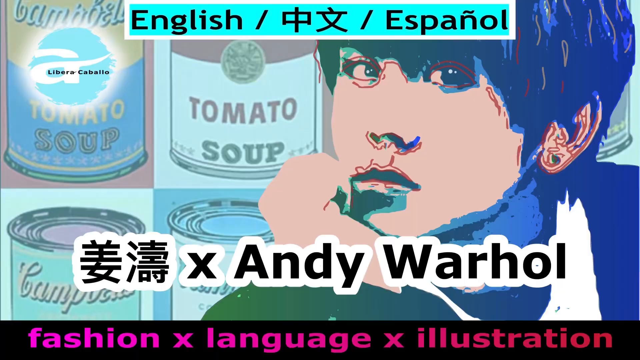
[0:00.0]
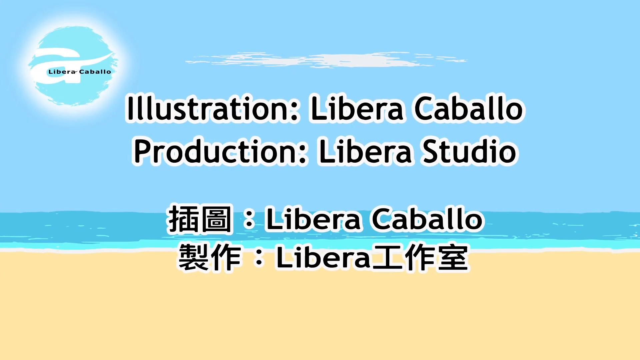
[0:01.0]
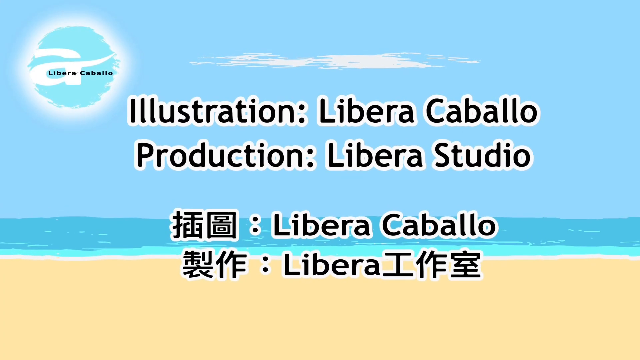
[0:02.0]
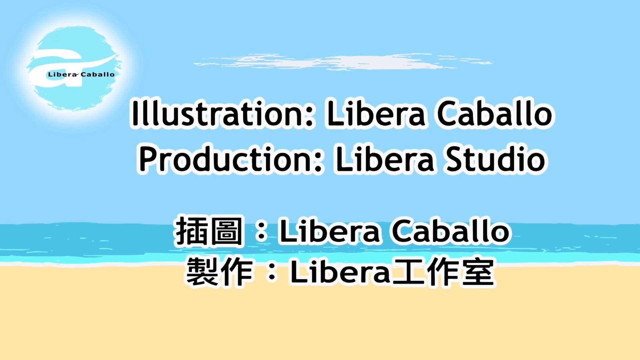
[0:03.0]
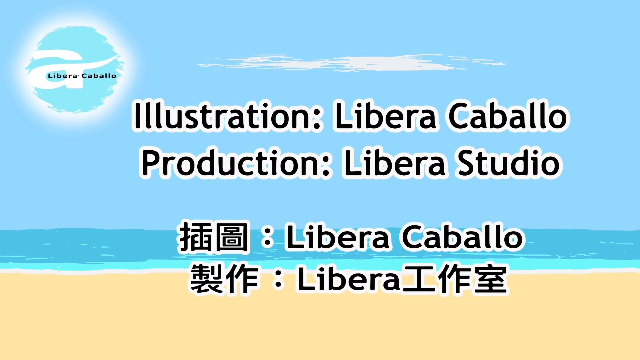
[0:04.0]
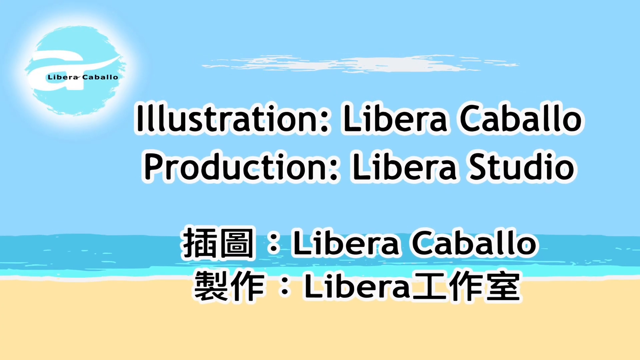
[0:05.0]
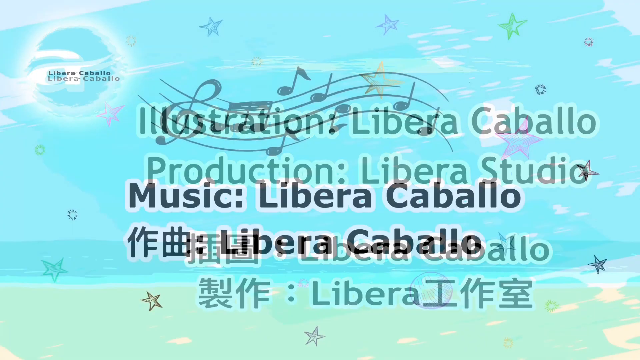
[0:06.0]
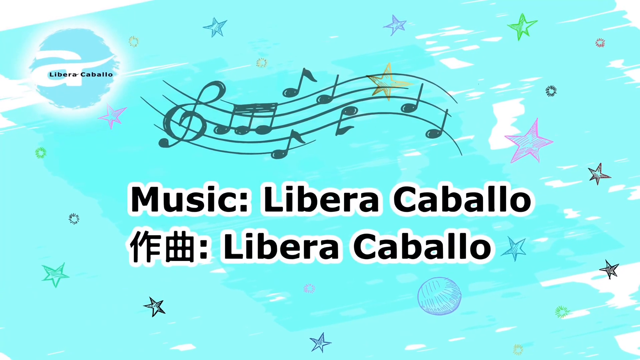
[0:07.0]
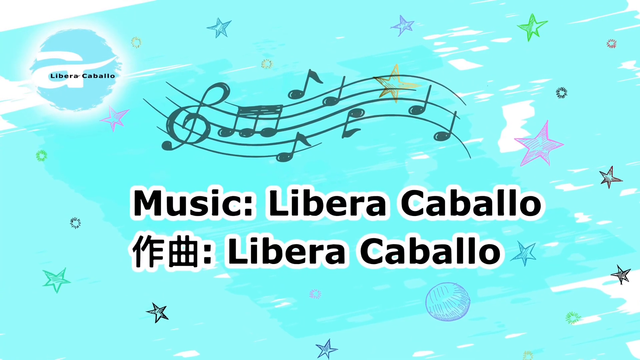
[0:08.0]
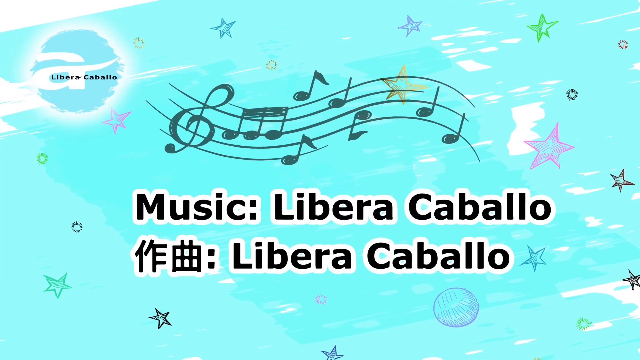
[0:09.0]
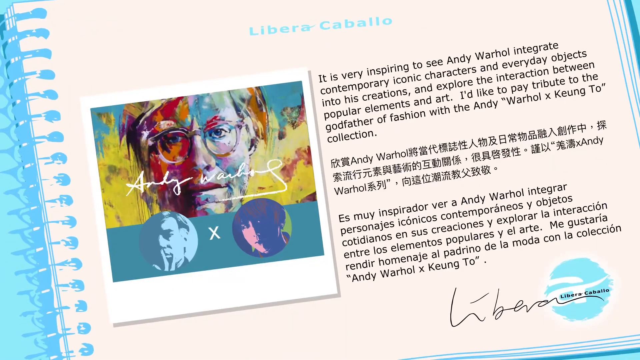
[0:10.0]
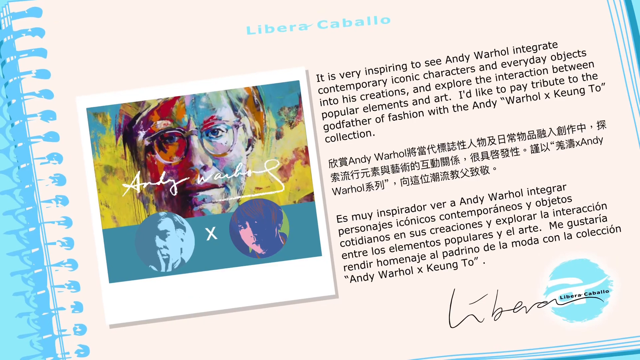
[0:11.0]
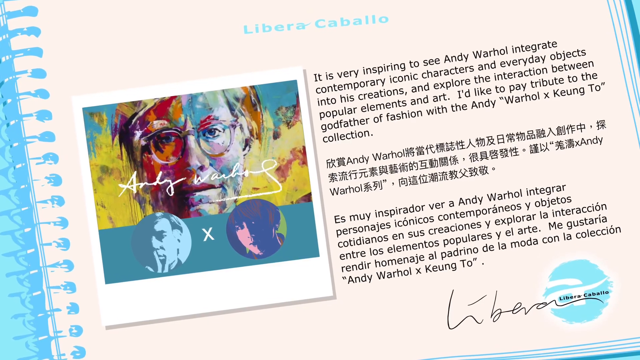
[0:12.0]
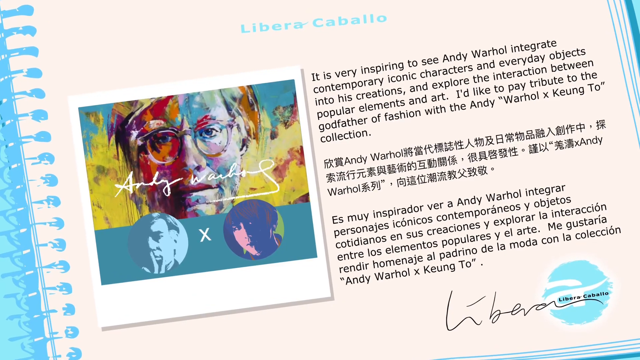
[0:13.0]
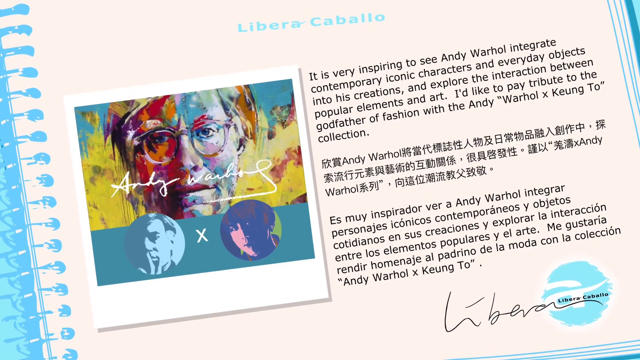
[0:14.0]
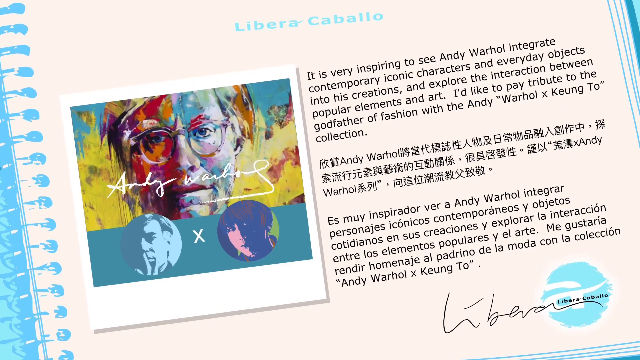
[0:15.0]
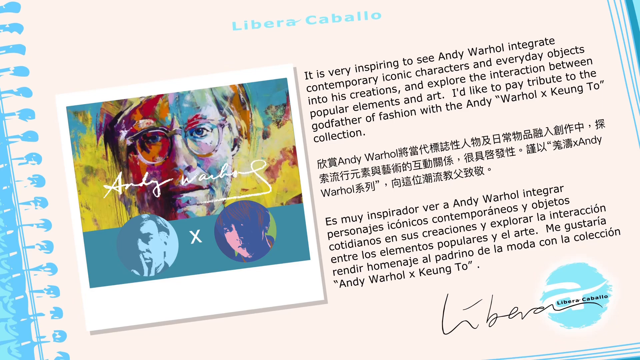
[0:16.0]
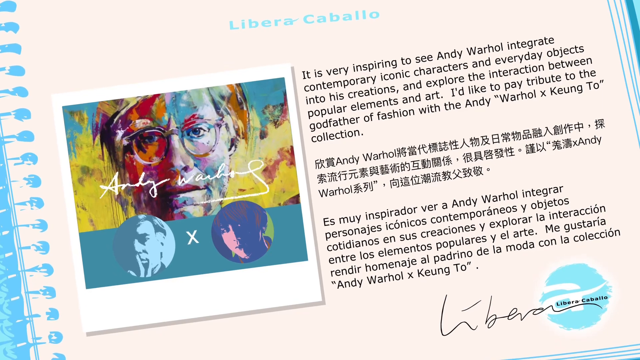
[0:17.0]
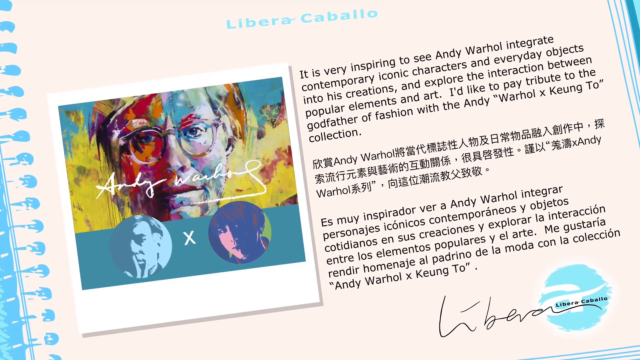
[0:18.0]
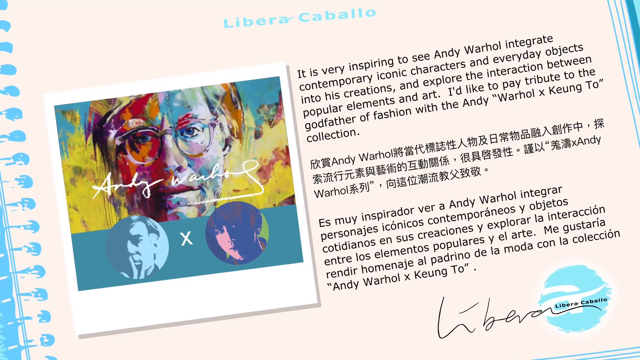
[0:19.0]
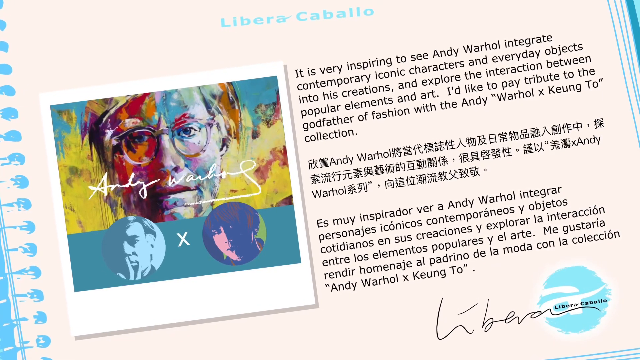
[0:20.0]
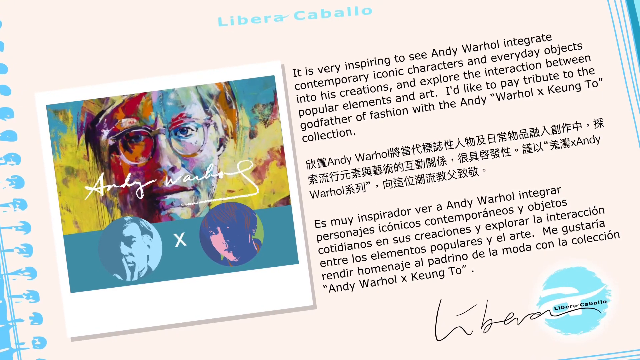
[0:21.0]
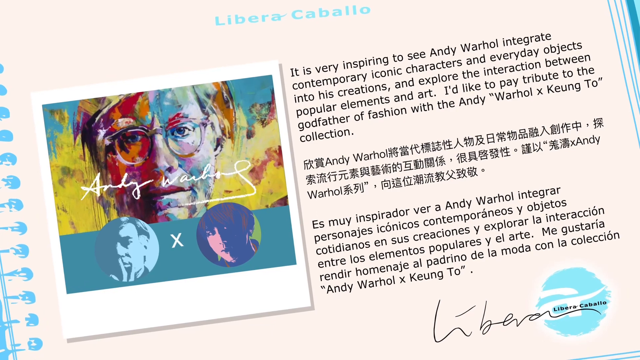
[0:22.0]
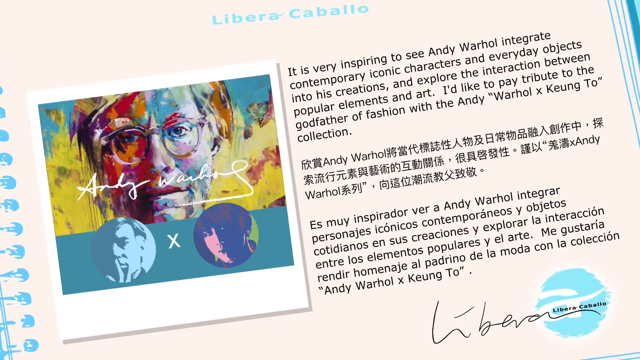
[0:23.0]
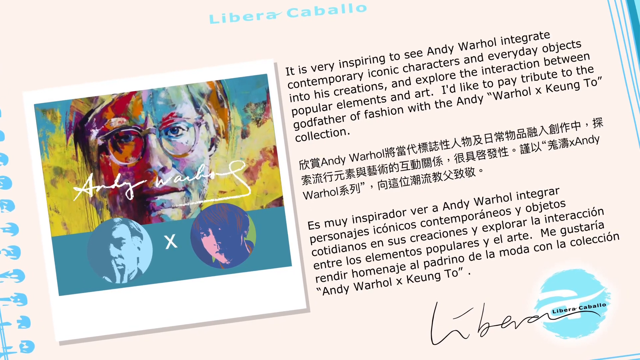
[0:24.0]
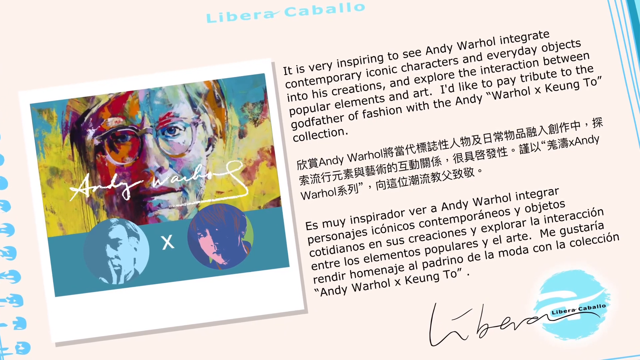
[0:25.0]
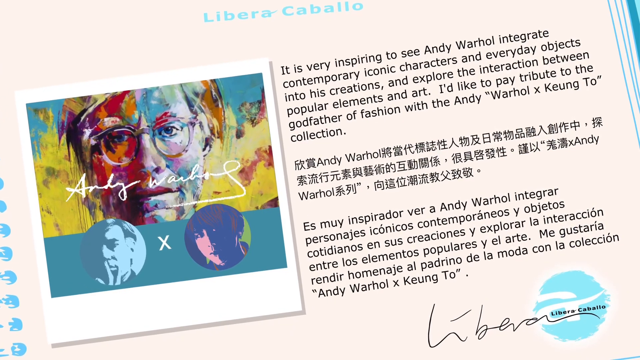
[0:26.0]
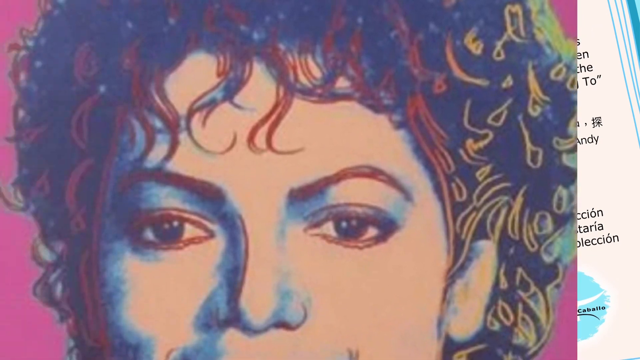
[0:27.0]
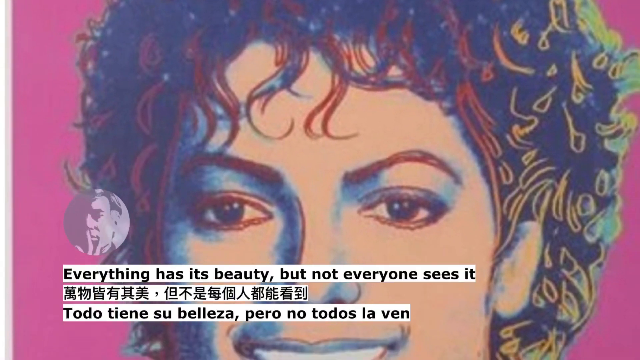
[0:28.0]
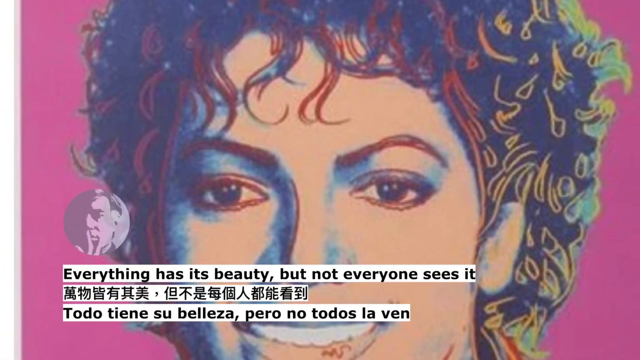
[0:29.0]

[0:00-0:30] An illustration shows a blue sky, a darker shade of blue water, then a lighter shade of blue water, a white outline, and just below that some yellow sand. The sun seems to be blue with a white outline and has the white outline of a letter A inside it, along with some black lettering reading "Liberia Cabellia". Black lettering in the center, with white outlining around it and a very small white cloud above it, reads "Illustration, Liberia Cabella, Production, Liberia Studio". Underneath is another language ending in "Liberia Cabello", another language below that reading "Liberia", and another language beside that as the view zooms in. The background image then is powder blue with stars, apparently purple and green, spaced around it. Black musical notes with black wavy lines running through them are visible. Underneath, black lettering with white outlining reads "Music, Liberia Cabello", with lettering in another language beside it, and the next line reads "Liberia Cabello" as the camera zooms in. The page then goes white, somewhat like a binder. On the white background, black letters on the right side read: "It is very inspiring to see Andy Warhol integrate contemporary iconic characters and everyday objects into his creations and explore the interaction between popular elements and art. I'd like to pay tribute to the godfather of fashion with the Andy Warhol X Jung II collection." Two other languages are just below that. On the left is an orange and pastel blue image of Andy Warhol showing his eyes, nose, mouth and glasses, with white lettering across the mouth reading "Andy Warhol". There are two circled images of two people, powder blue on the left and roughly black, green and light pink on the other, with a white X in the middle and a powder blue, teal-like box underneath. A black signature is at the bottom right, powder blue lettering at the top reads "Liberia Cabello", and there is a blue circle with a white A inside it and black lettering reading "Liberia Cabello".